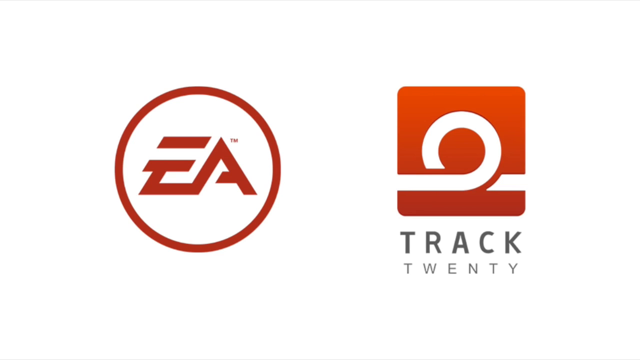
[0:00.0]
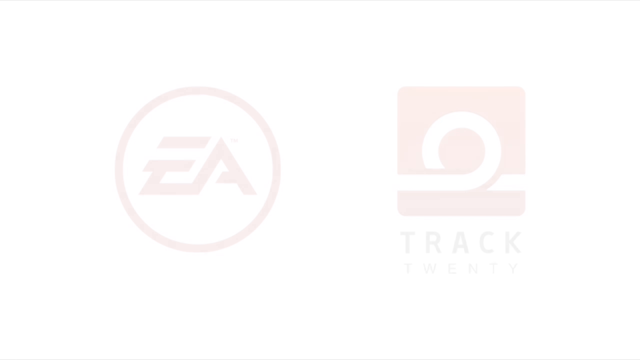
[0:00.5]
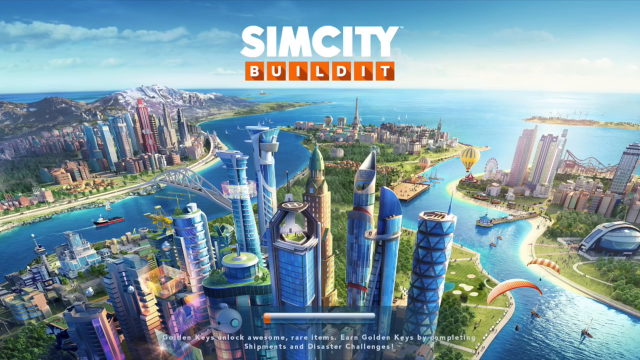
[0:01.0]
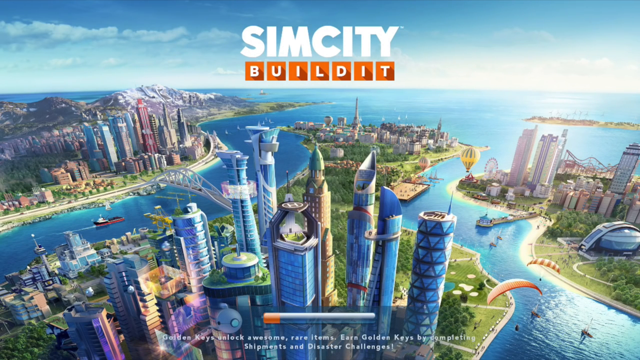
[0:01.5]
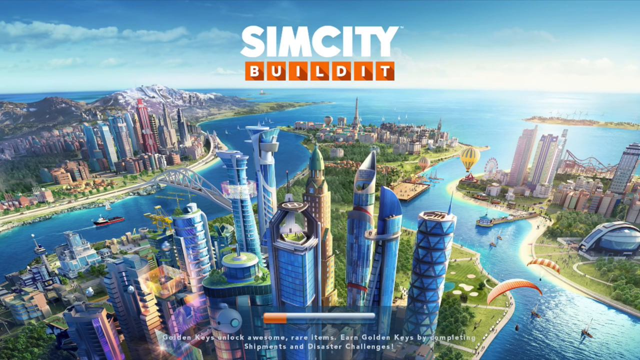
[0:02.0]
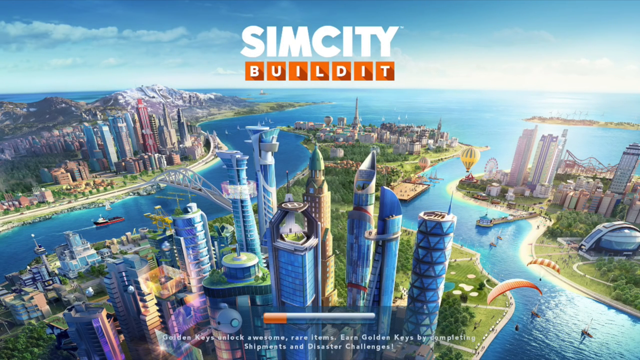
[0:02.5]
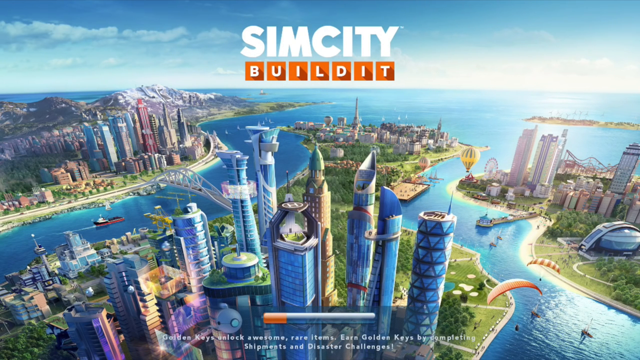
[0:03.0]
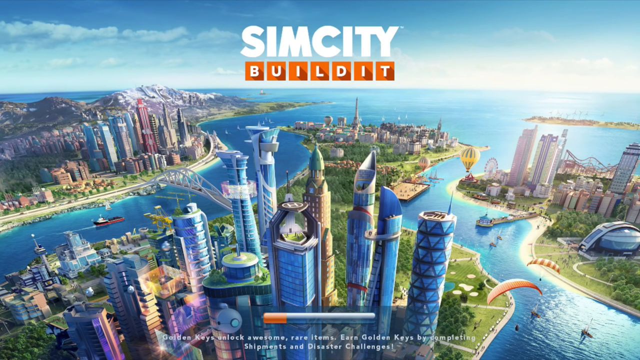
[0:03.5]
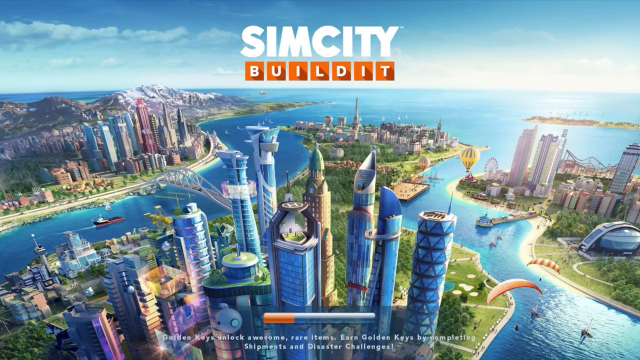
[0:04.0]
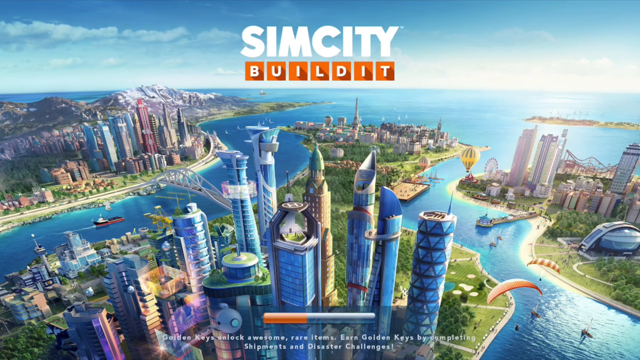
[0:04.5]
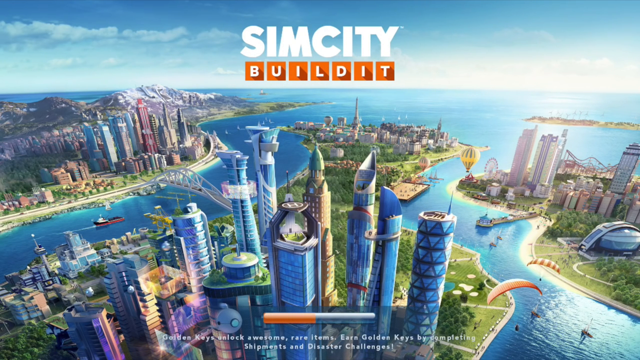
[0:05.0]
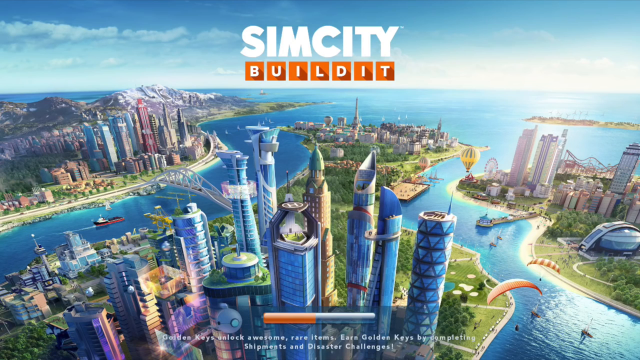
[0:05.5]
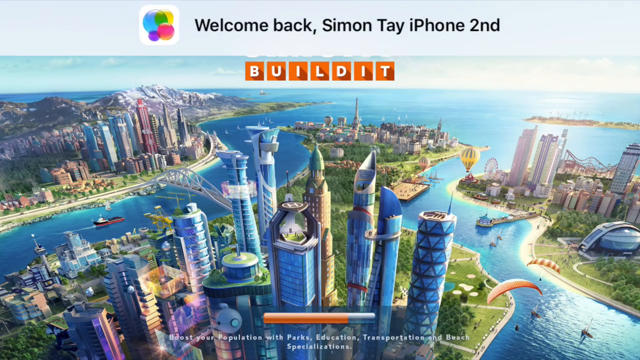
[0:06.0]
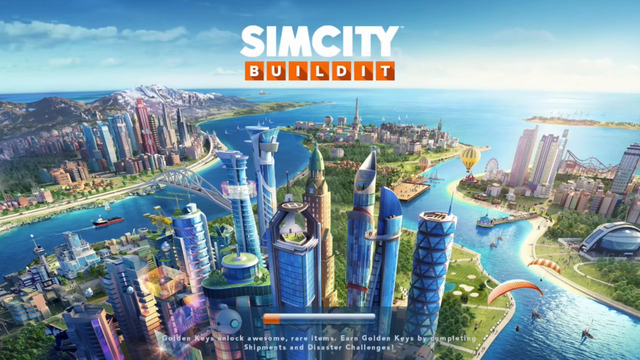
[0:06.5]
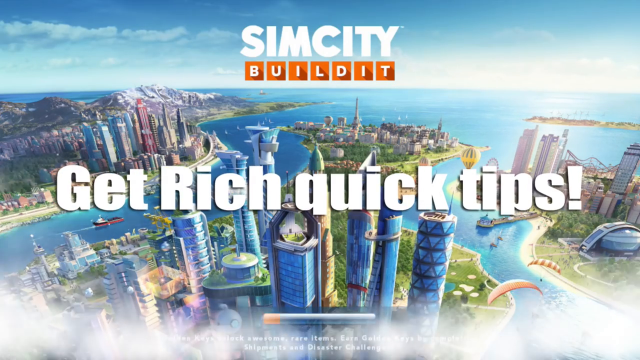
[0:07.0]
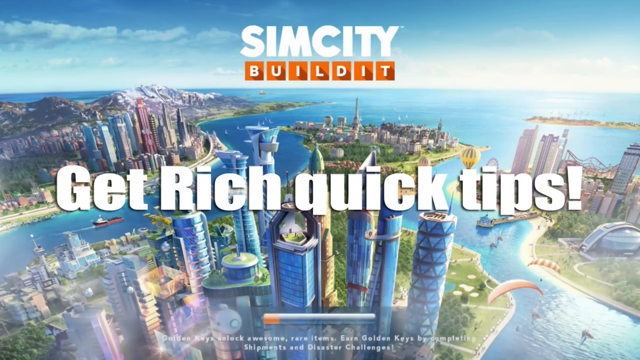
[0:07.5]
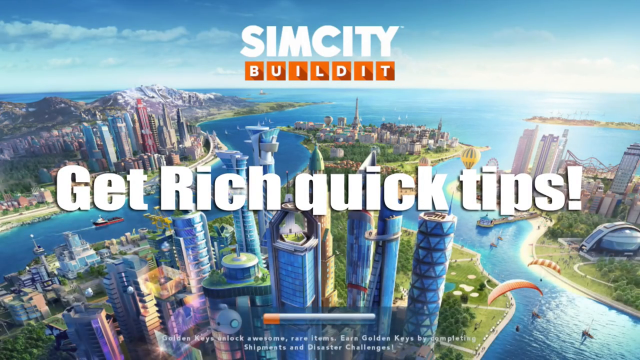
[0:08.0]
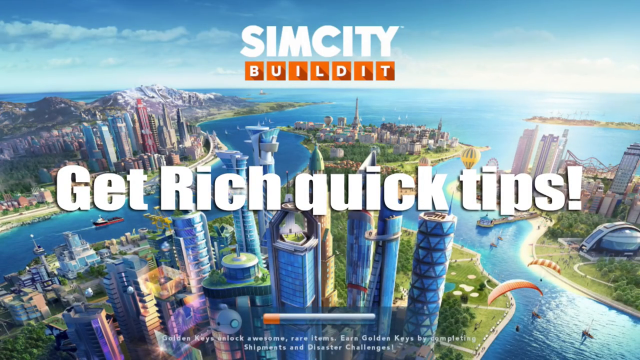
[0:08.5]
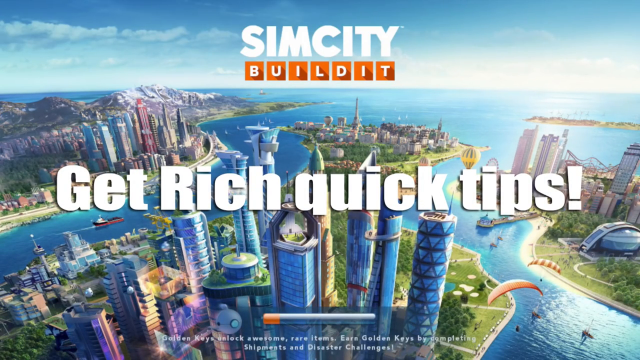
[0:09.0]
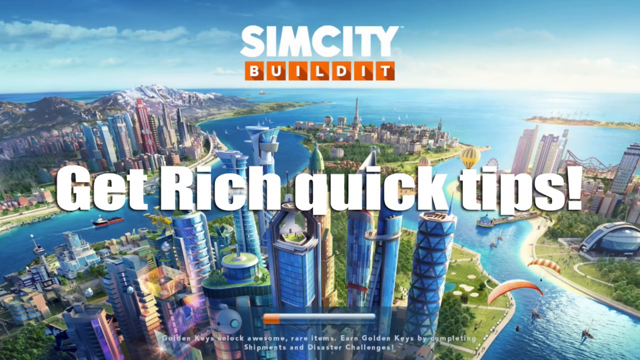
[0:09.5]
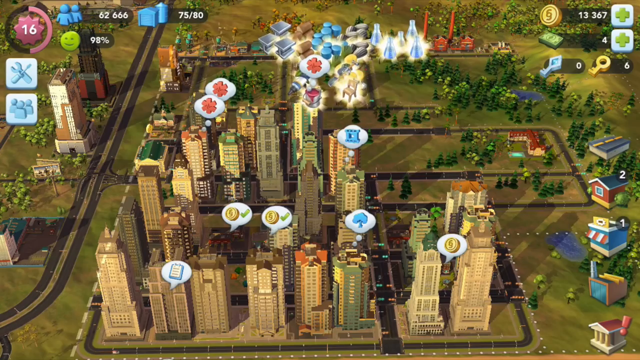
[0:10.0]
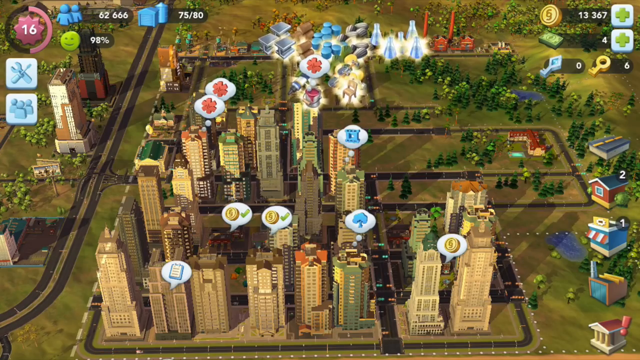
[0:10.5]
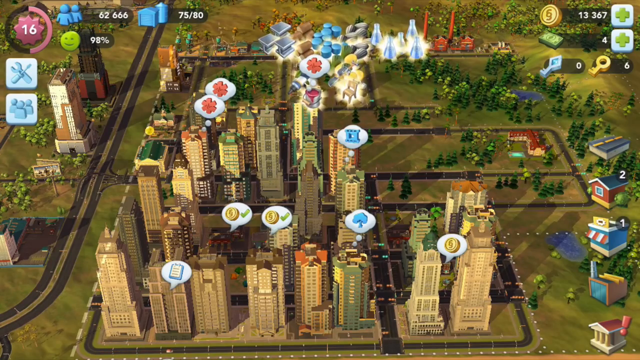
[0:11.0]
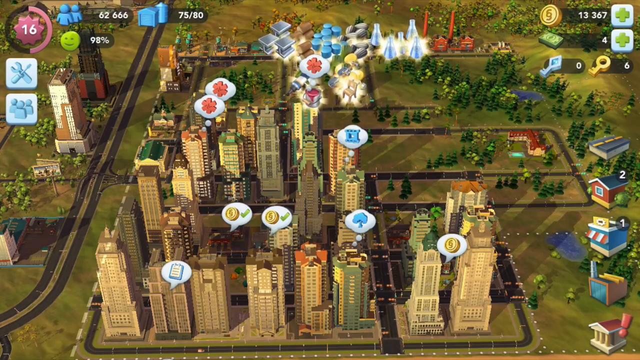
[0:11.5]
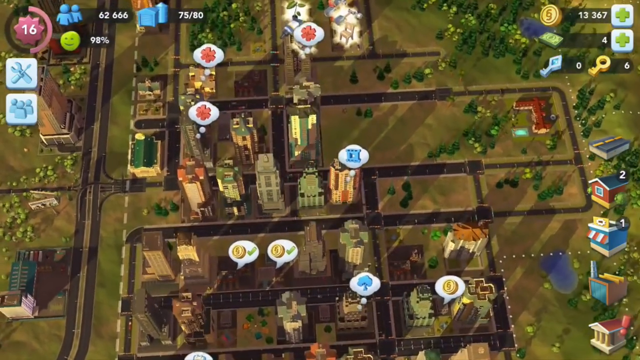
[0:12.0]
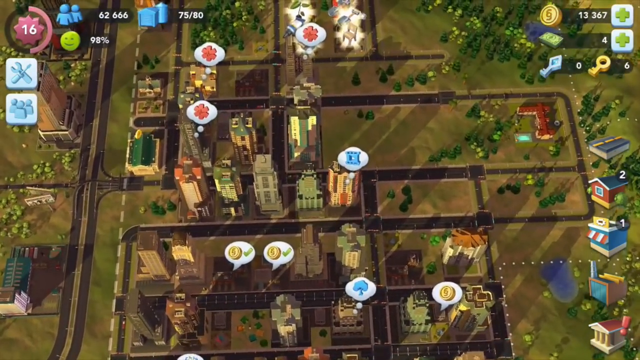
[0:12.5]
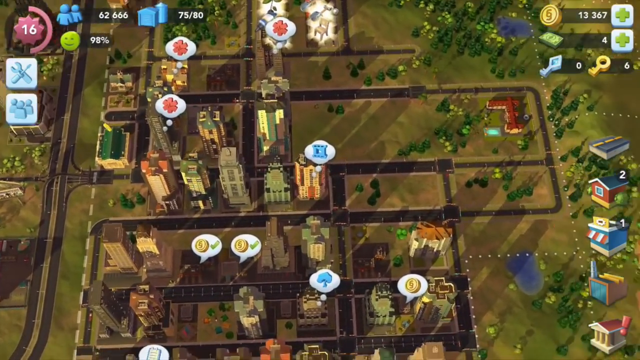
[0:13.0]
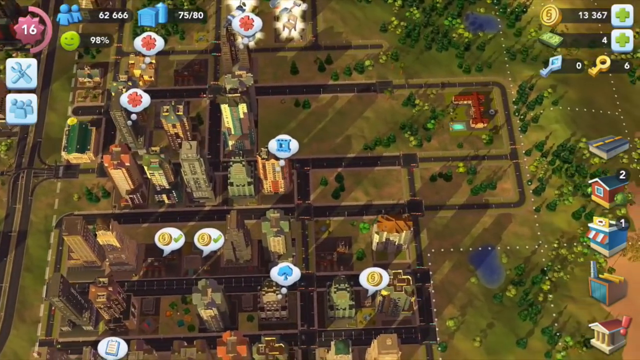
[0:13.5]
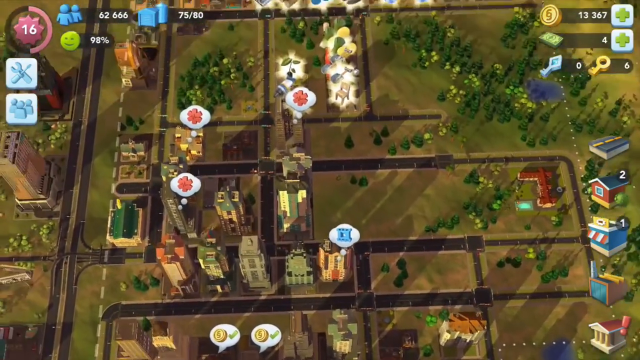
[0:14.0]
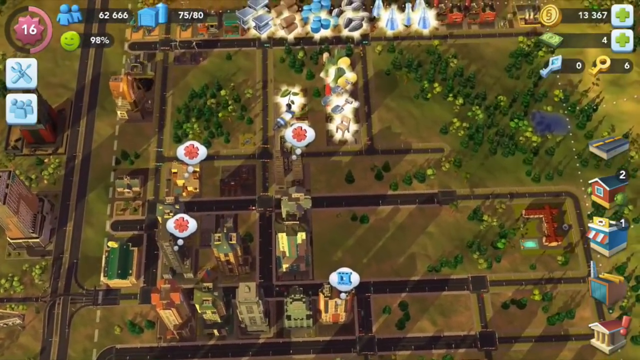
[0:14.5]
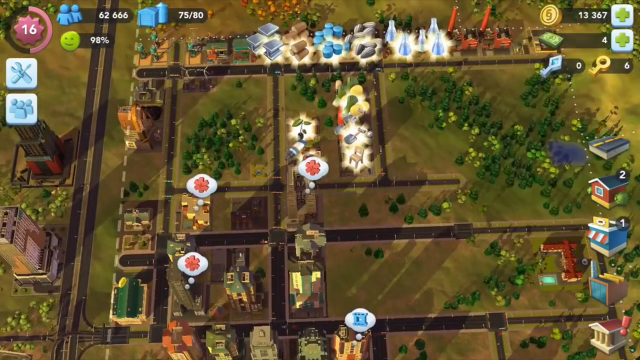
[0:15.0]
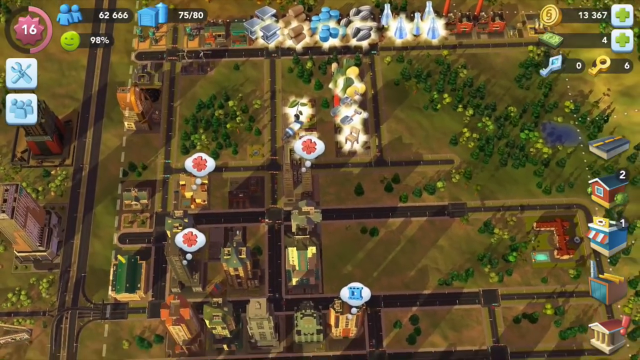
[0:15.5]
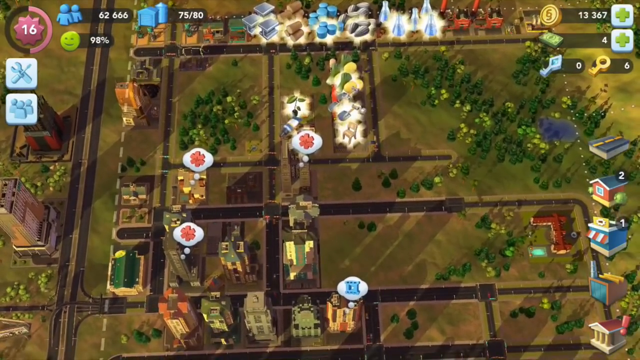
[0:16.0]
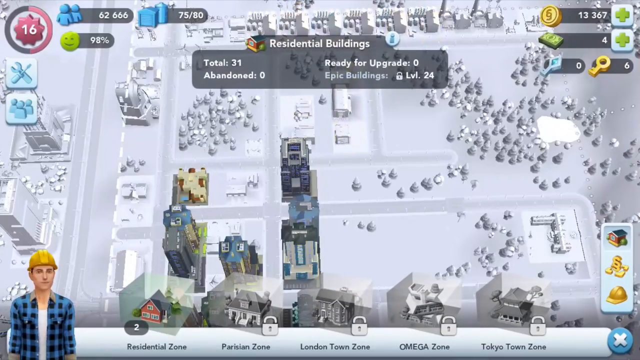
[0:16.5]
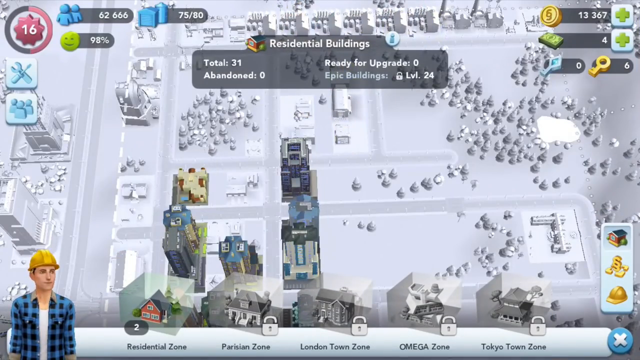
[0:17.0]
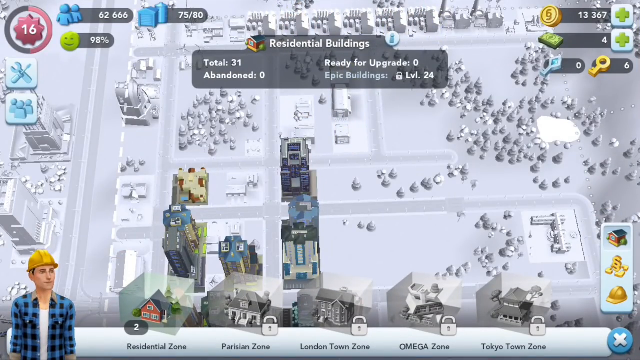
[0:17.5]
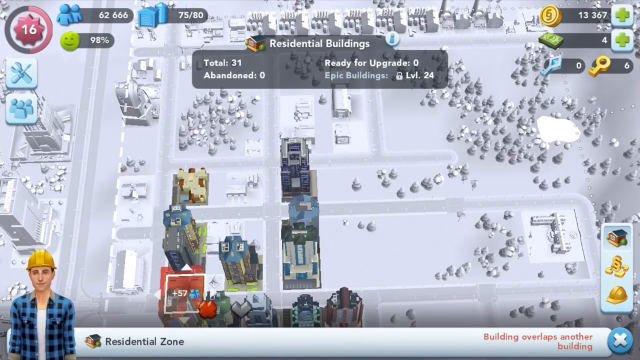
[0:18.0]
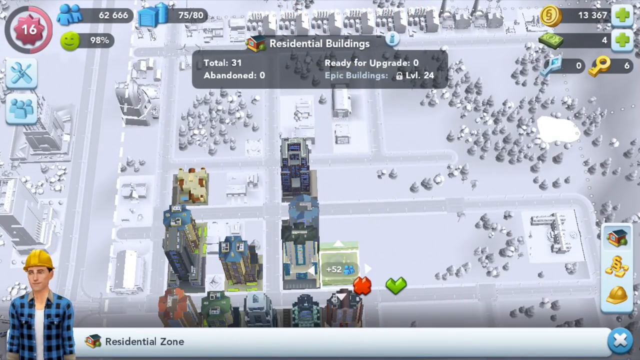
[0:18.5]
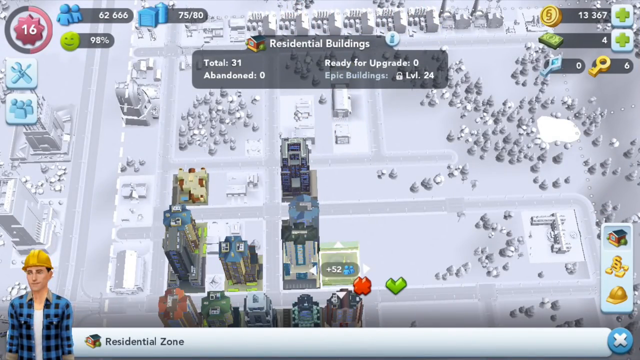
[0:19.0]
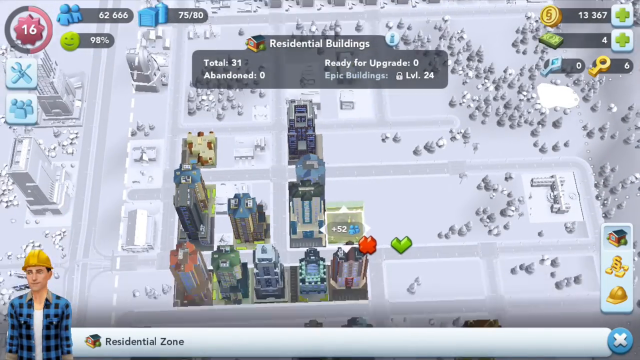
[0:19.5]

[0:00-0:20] The video opens with the EA logo, followed by another logo and a Sim City title. A loading screen shows a kind of futuristic city with many tall buildings, parks in the background, bodies of water, bridges, and a few parachutes. The game loads, and the text "get rich quick tips" appears. The view then switches to the game itself, an overhead view of the city with some floating objects hovering around, apparently marking the areas where building is possible. A person appears in the bottom left-hand corner, shaking their head slightly back and forth, apparently wearing a construction worker's hat. In the upper left-hand corner there are some icons: the number 16, and underneath it what looks like a tool icon and a people icon.